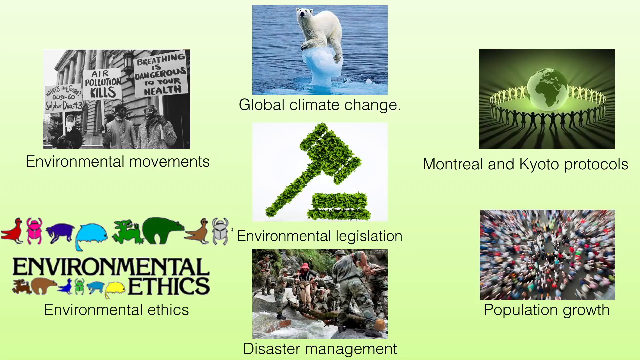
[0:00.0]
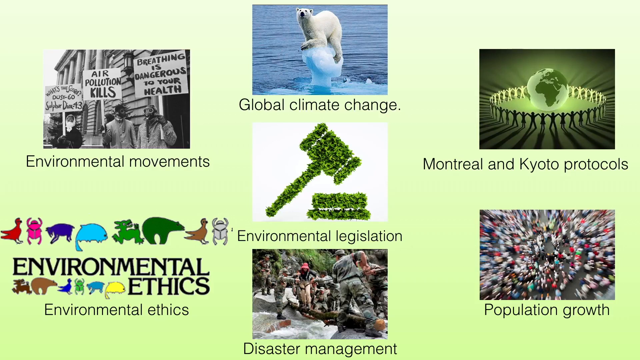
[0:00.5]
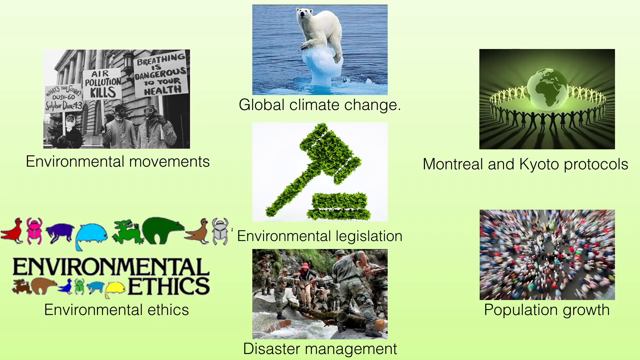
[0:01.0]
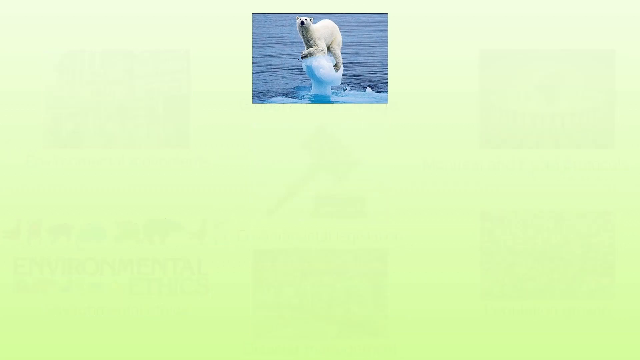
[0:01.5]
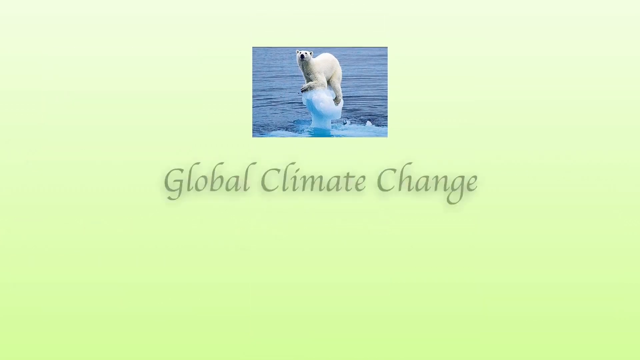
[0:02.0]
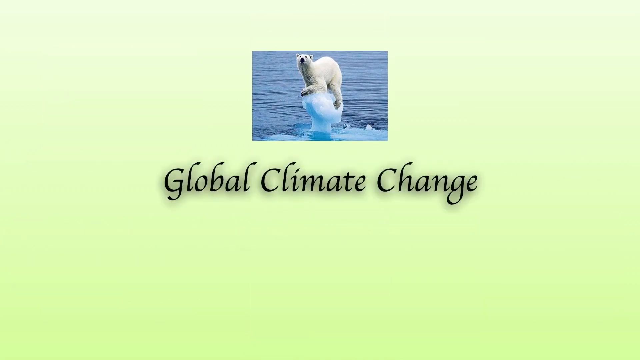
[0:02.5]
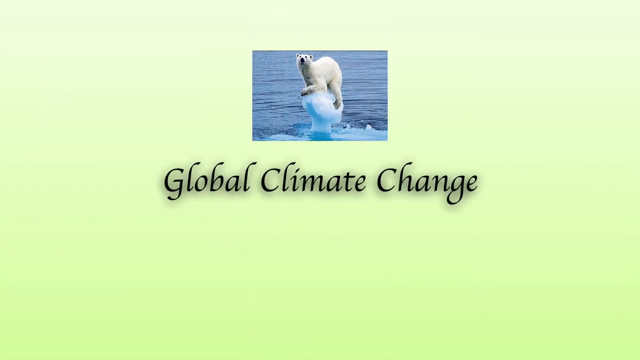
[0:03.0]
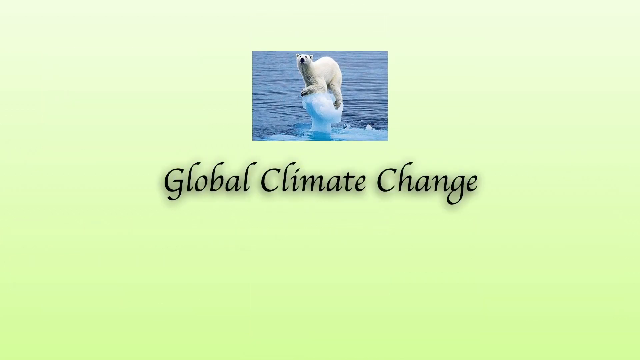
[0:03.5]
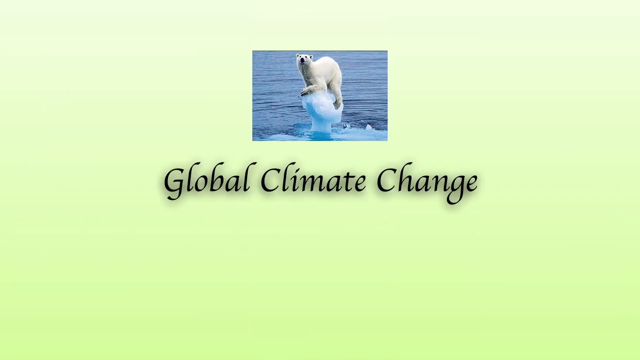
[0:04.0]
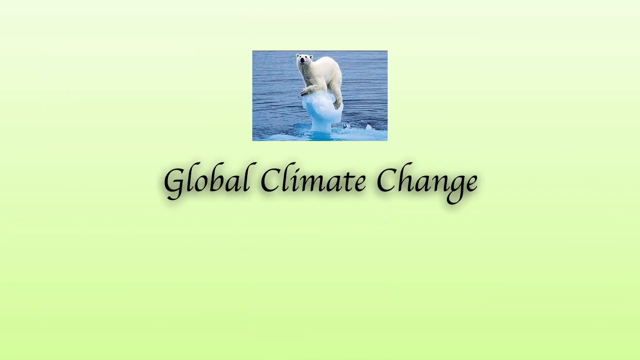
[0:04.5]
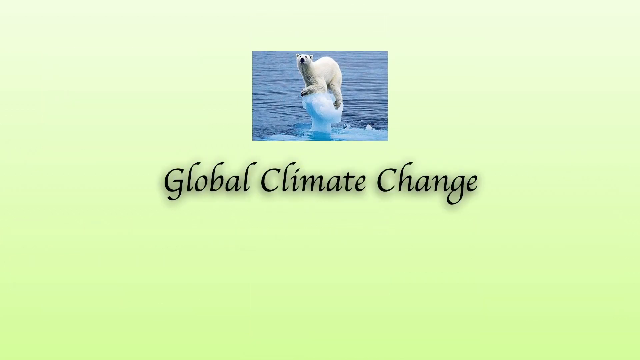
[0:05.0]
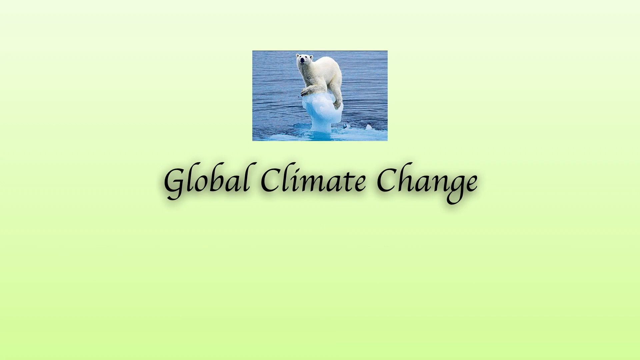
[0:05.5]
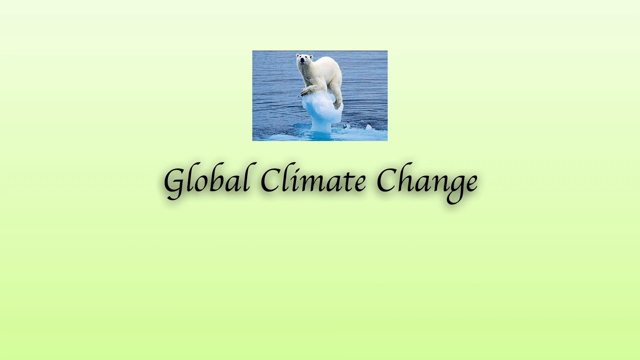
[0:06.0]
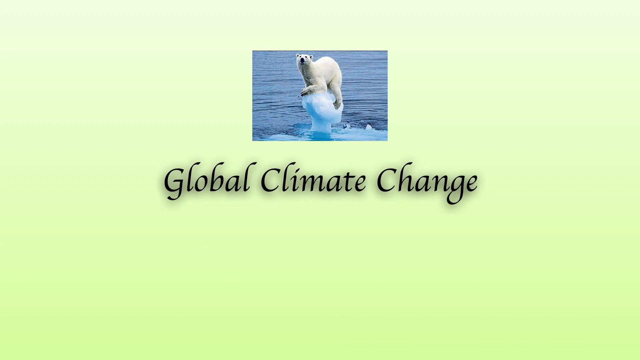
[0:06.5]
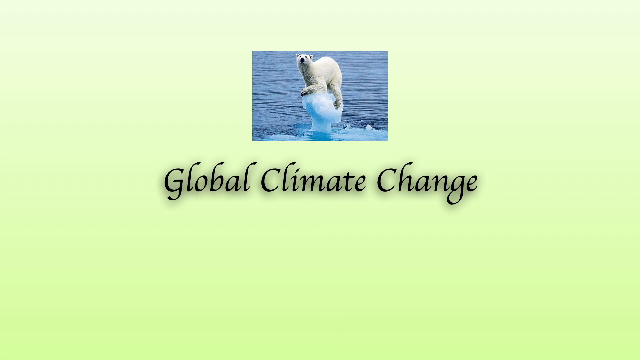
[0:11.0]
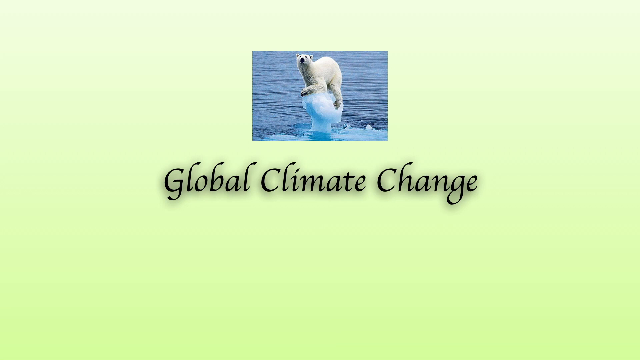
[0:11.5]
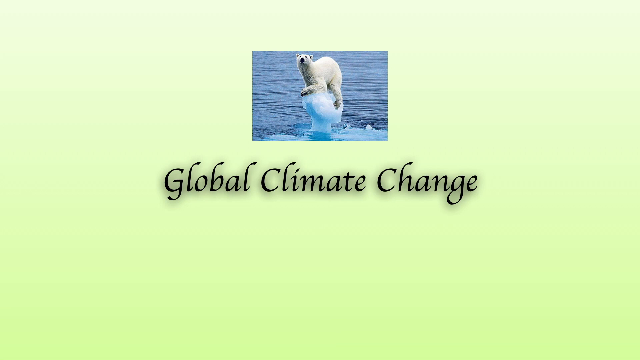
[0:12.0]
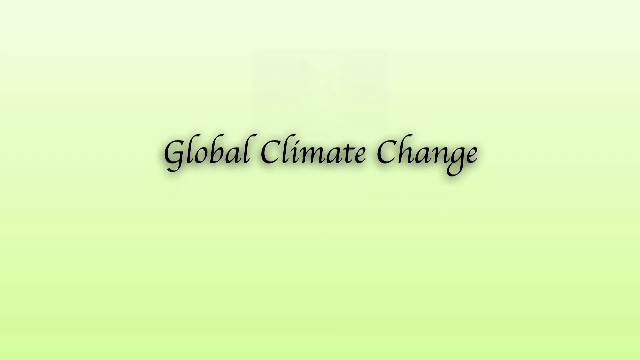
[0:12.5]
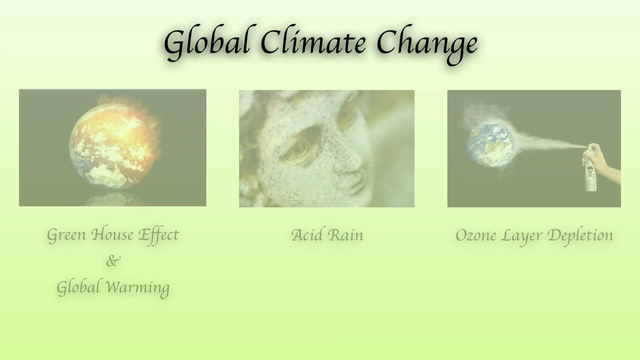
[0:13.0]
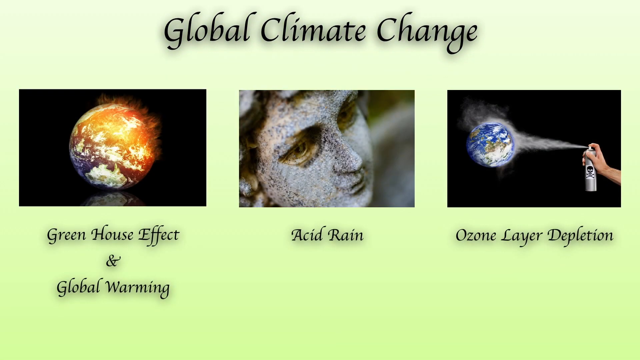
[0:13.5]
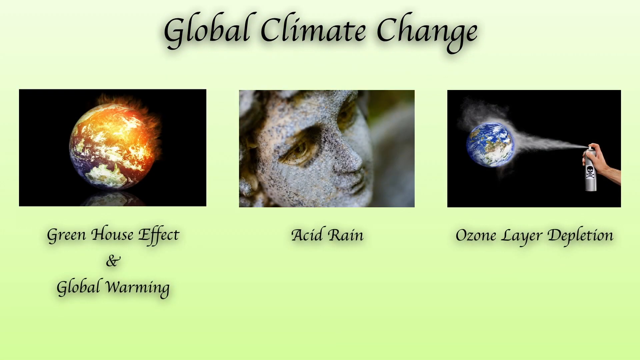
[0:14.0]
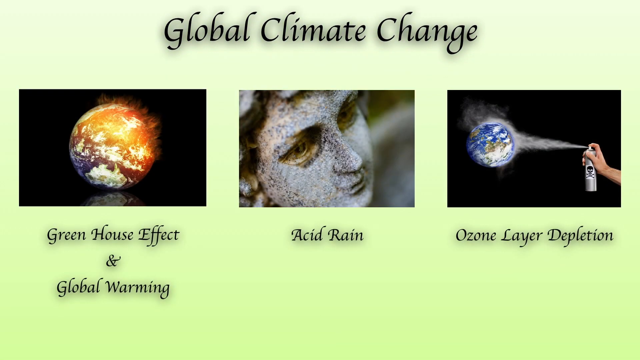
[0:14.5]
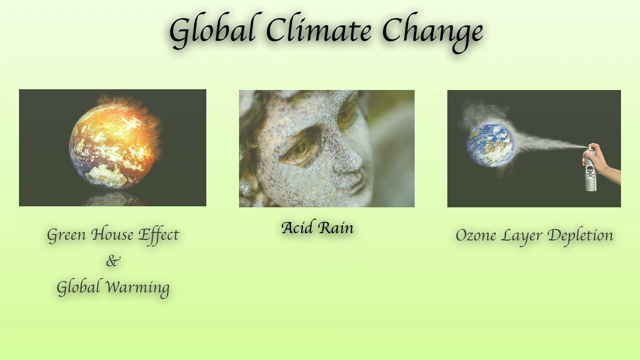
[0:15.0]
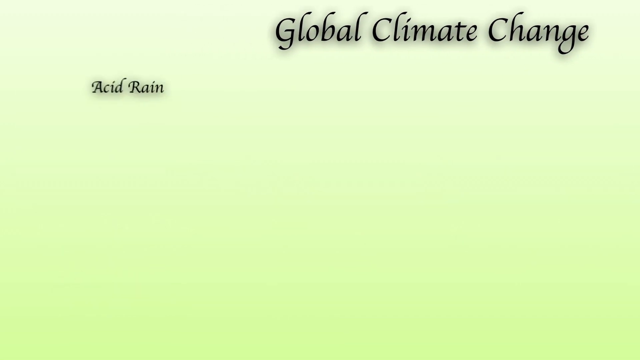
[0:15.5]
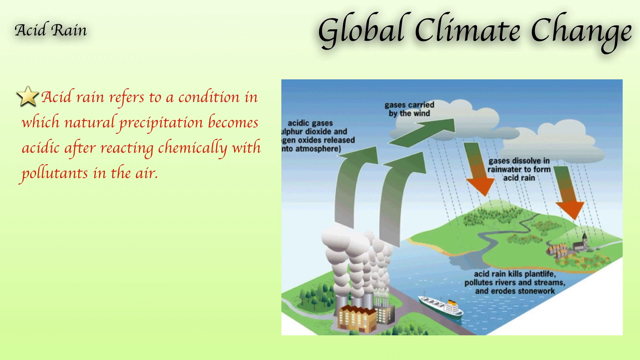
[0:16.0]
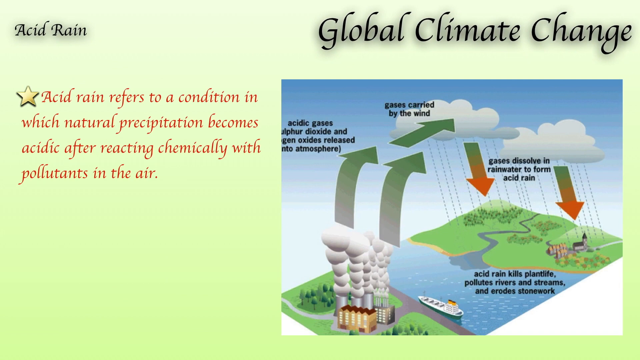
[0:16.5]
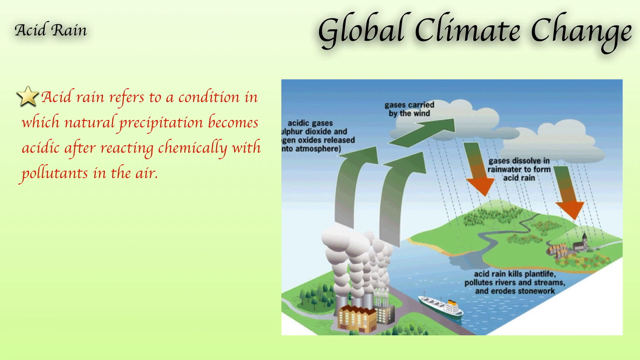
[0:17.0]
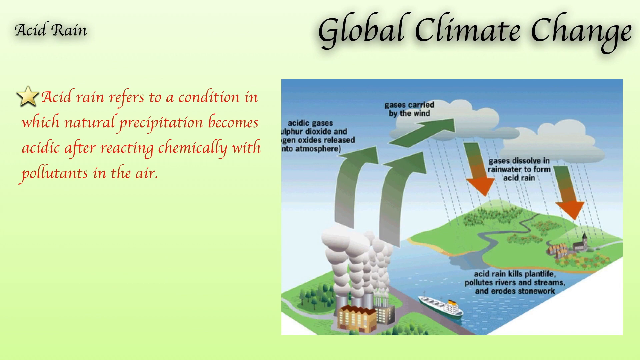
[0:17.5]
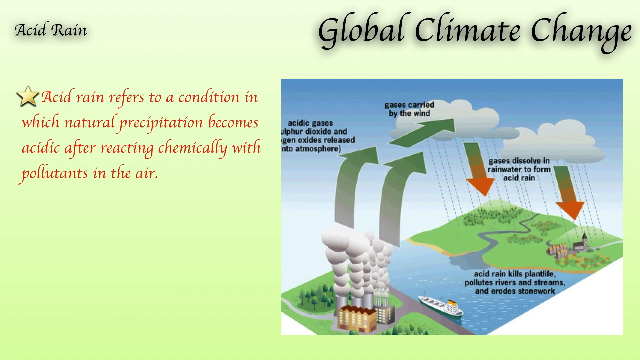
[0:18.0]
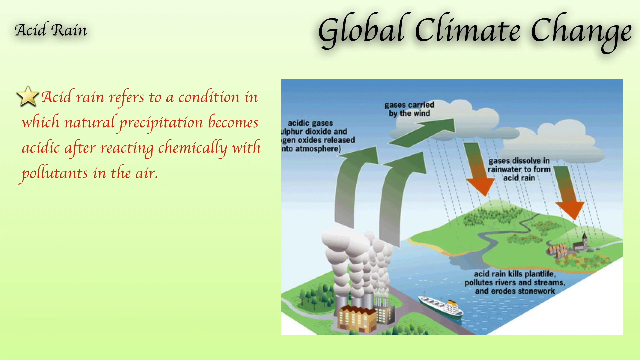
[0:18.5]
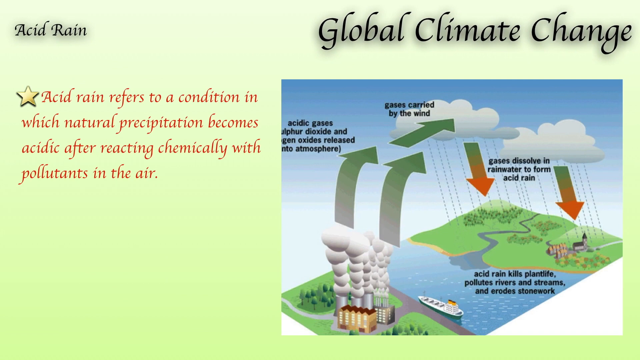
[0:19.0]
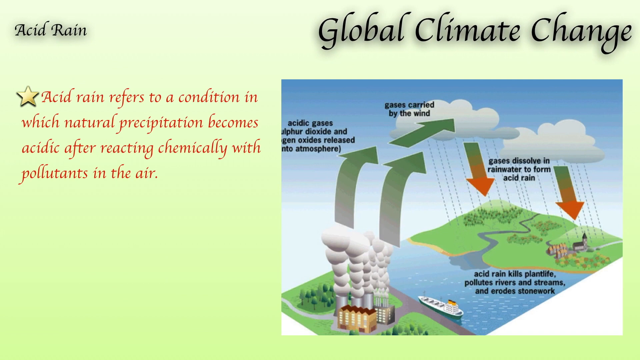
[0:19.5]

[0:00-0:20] The first slide shows various topics with text and images. An environmental movement section has an image of protesters. A global climate change image shows a polar bear on a melting iceberg. An image of a world carries the text "Montreal and Kyoto protocols", an image of a large population carries the text "population growth", an image of a hammer of leaves carries the text "environmental legislation", and an image of soldiers with people carries the text "disaster movements". On the bottom left, an image of animals surrounds text reading "environmental ethics", with varying animal-like logos and smaller text underneath also saying "environmental ethics". Most of the options then disappear, and the global climate change option becomes bigger with the polar bear and the iceberg. The polar bear fades away and global climate change moves up to the top of the image. New images appear: a burning earth with "greenhouse effect", a statue with "acid rain" in text underneath it, and the earth being sprayed with "ozone layer depletion" text underneath it. The slide quickly transitions to a page about acid rain with a definition and an image.